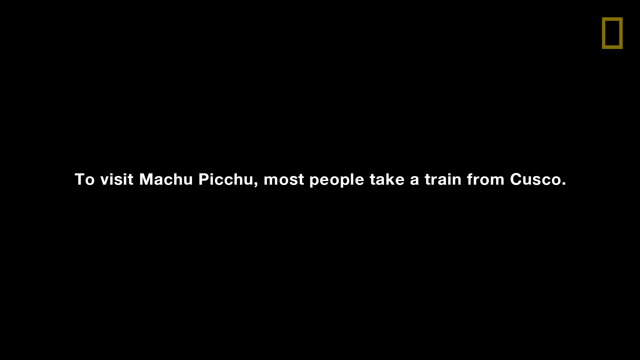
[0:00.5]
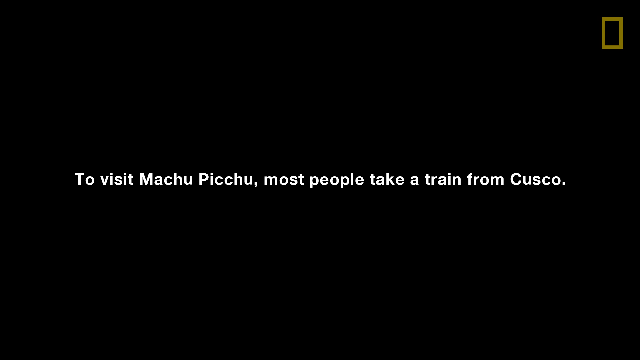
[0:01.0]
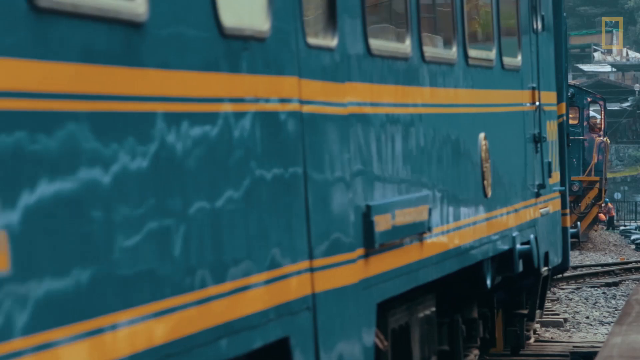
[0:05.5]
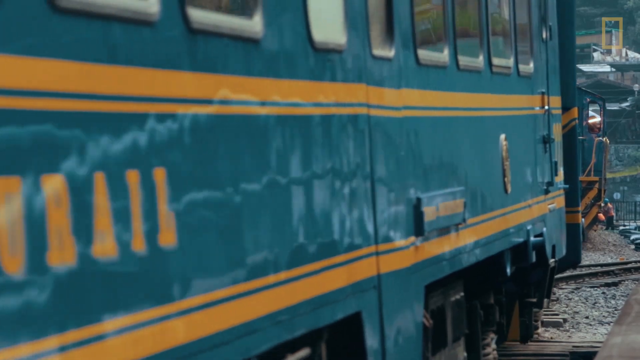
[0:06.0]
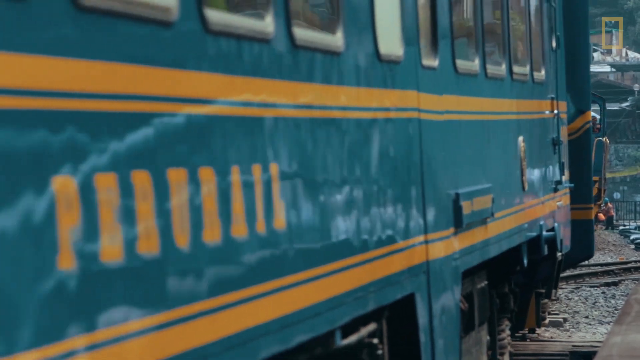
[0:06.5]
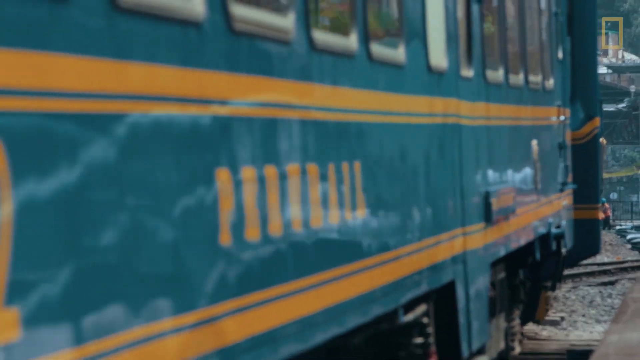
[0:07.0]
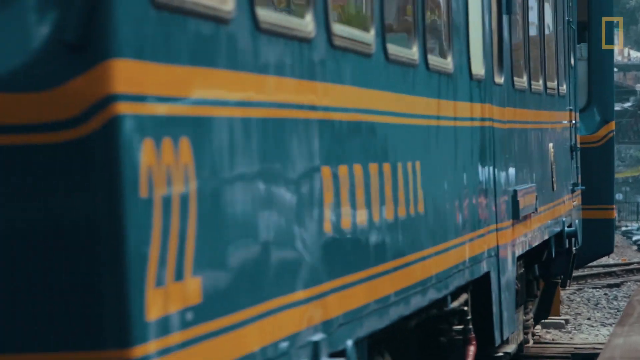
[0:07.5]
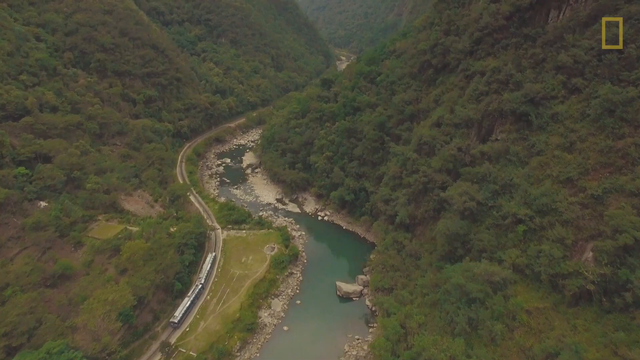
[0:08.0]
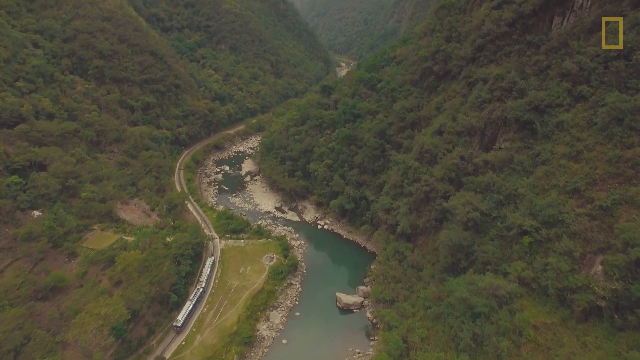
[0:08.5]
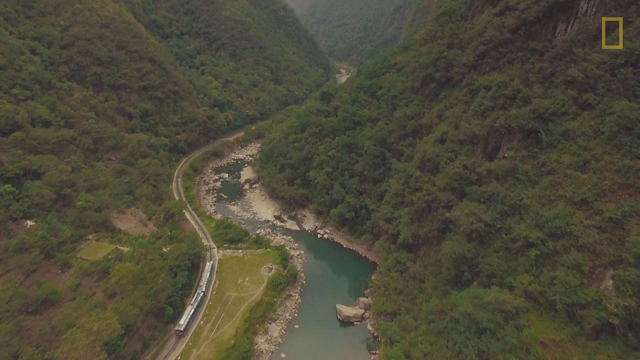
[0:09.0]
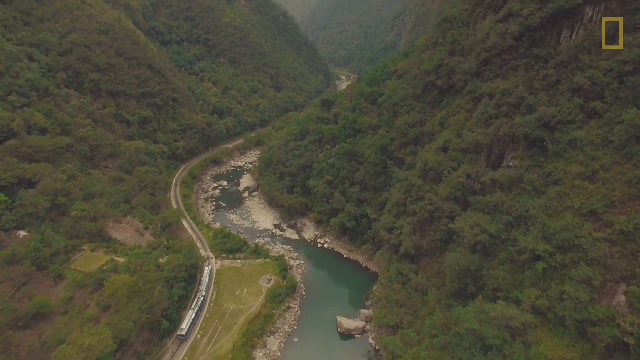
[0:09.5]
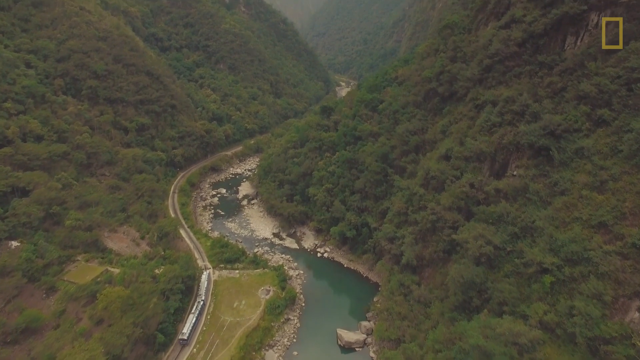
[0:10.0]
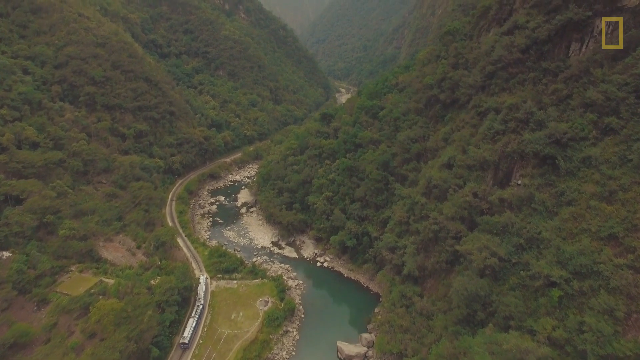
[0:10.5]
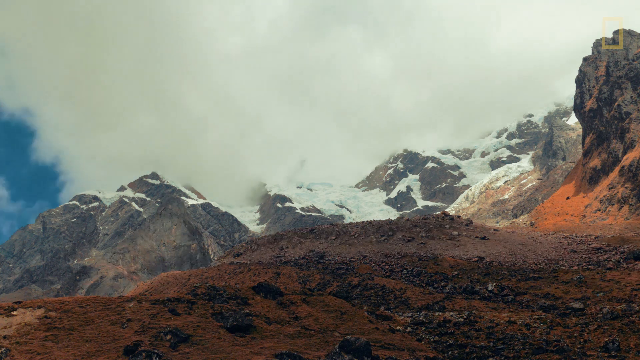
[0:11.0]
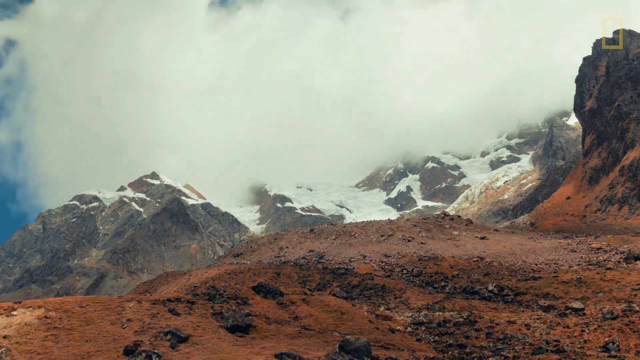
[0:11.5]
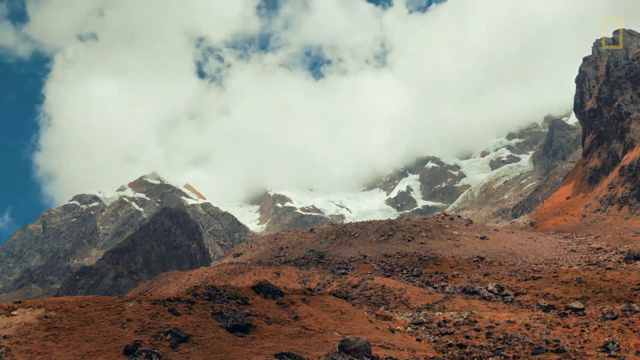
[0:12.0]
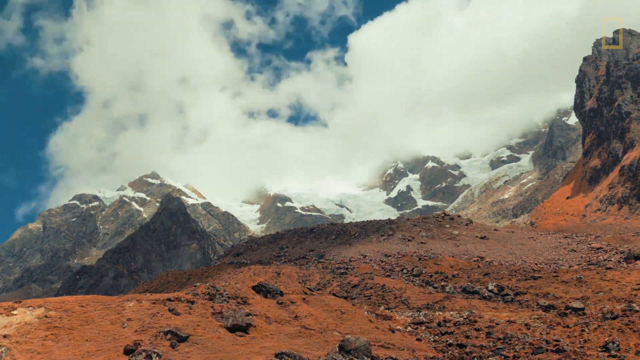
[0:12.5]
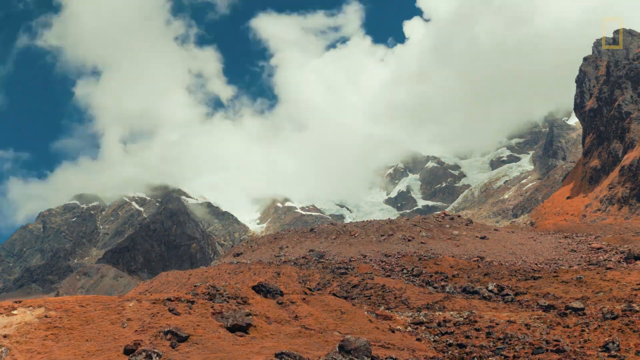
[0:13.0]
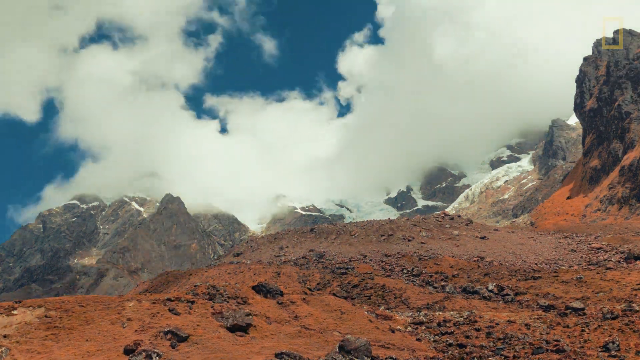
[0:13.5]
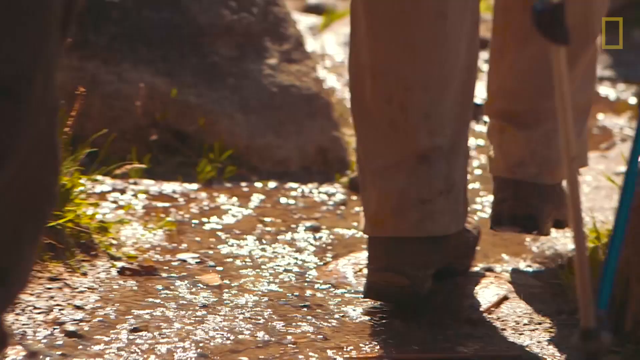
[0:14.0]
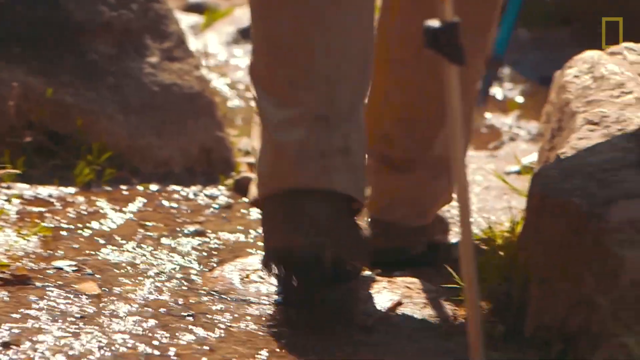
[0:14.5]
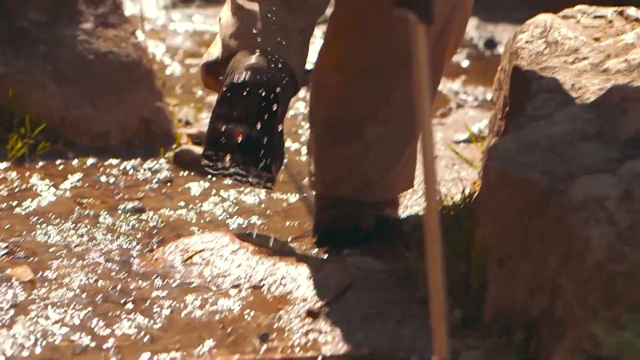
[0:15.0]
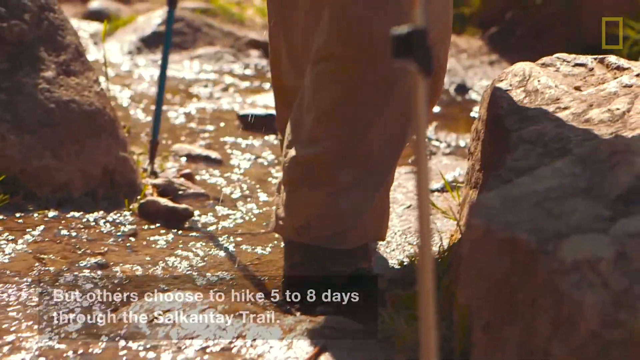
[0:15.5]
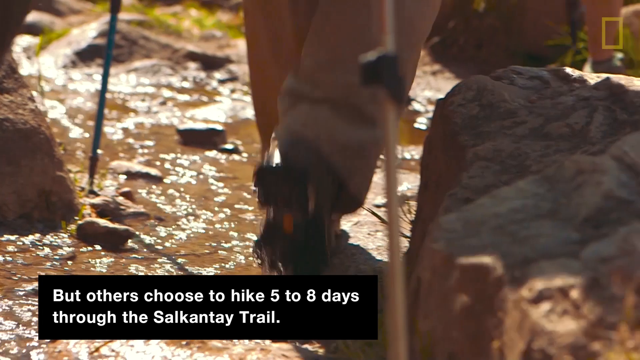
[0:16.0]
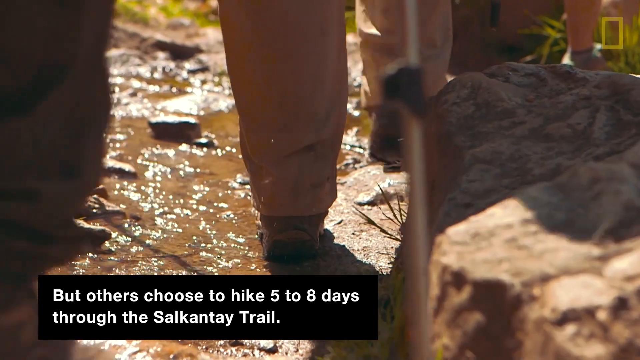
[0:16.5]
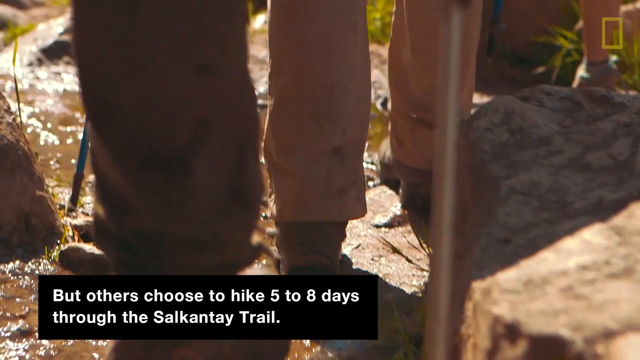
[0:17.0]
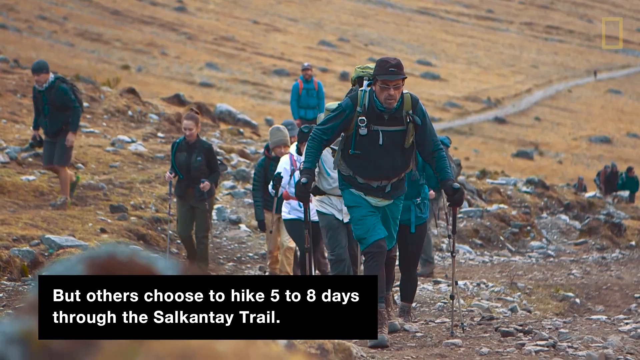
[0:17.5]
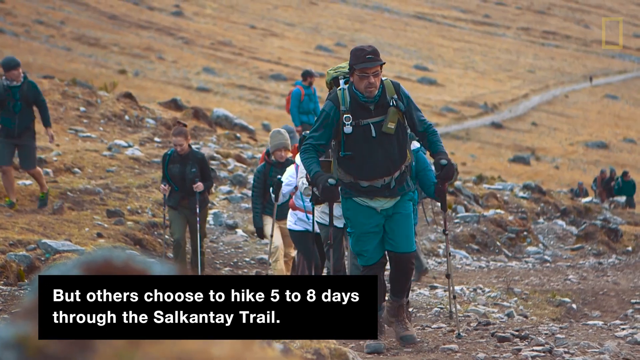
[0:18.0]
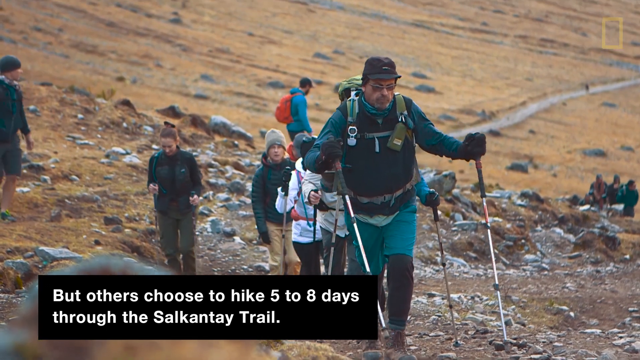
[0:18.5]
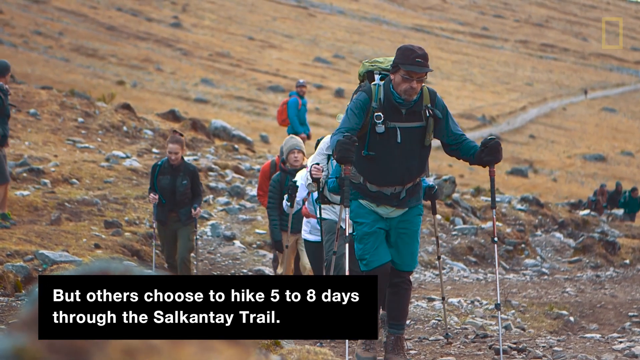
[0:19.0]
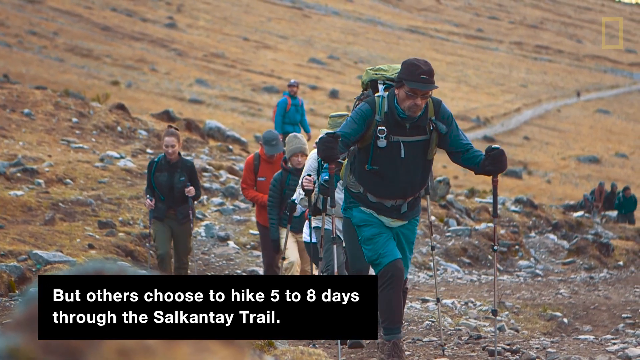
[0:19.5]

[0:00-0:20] The video is about hiking to Machu Picchu. A blue train with yellow stripes, only three or four cars long, runs beside a river with green hills beside it. Then people are shown hiking with backpacks on and hiking sticks out, walking up through some water over steep, rough, rocky terrain. They wear coats and caps, and it is fairly windy and chilly out. Clouds scuttle over the tops of mountains that are mostly bare, with a lot of yellow and dried grass on them.